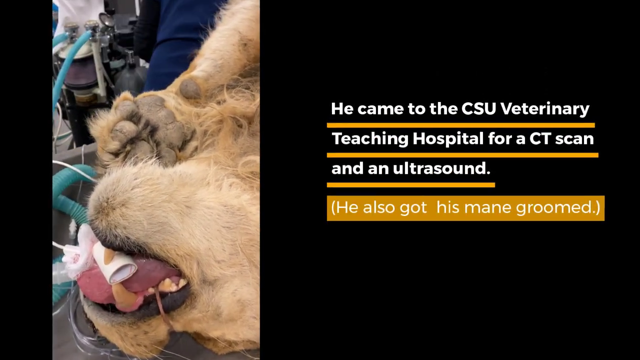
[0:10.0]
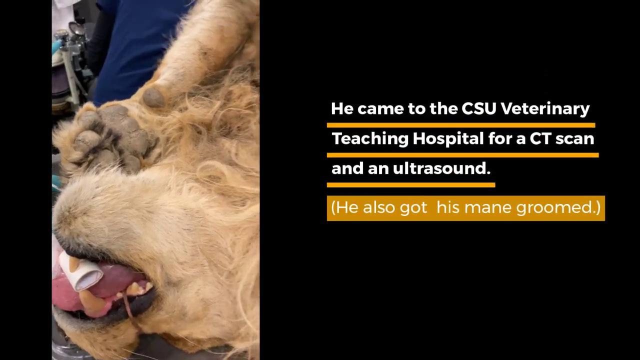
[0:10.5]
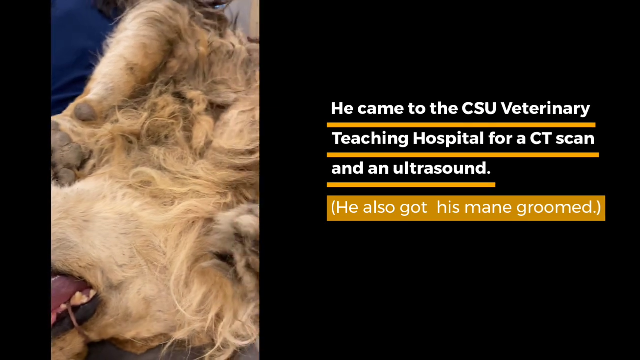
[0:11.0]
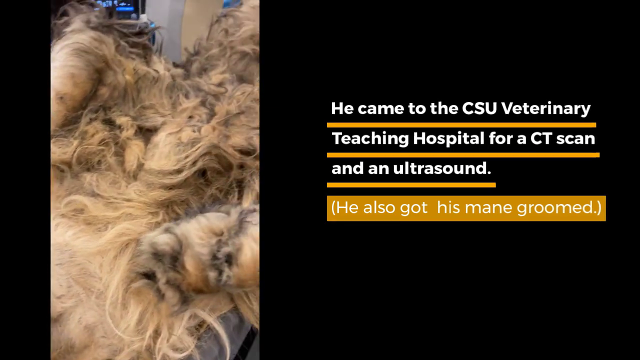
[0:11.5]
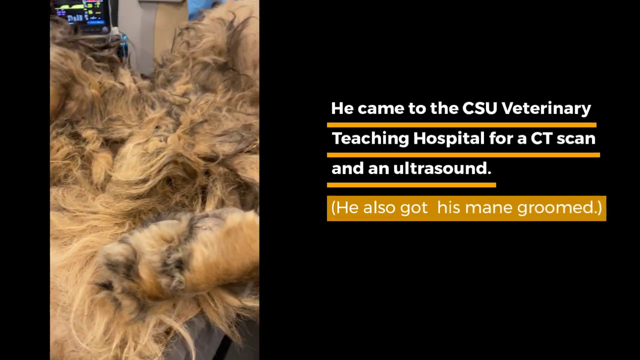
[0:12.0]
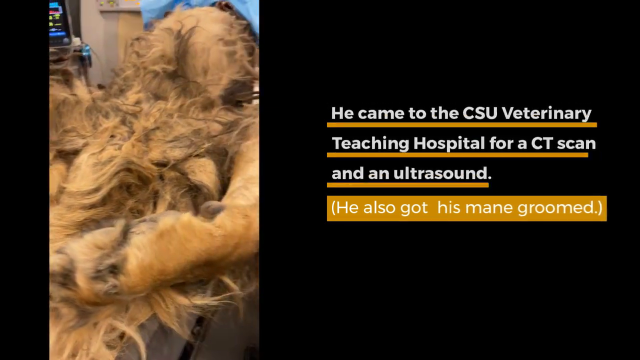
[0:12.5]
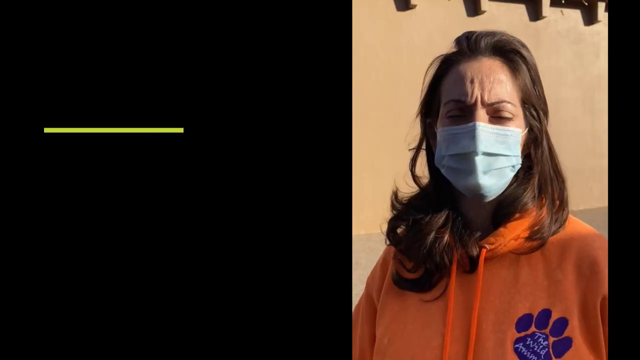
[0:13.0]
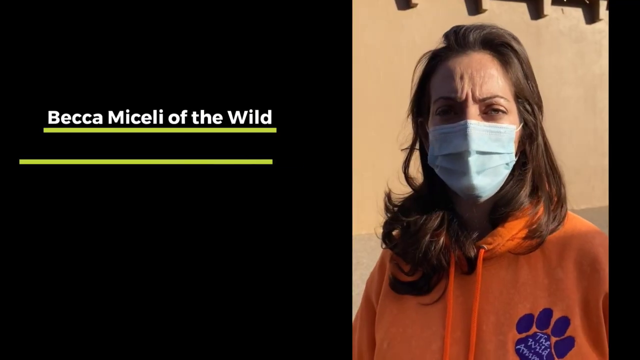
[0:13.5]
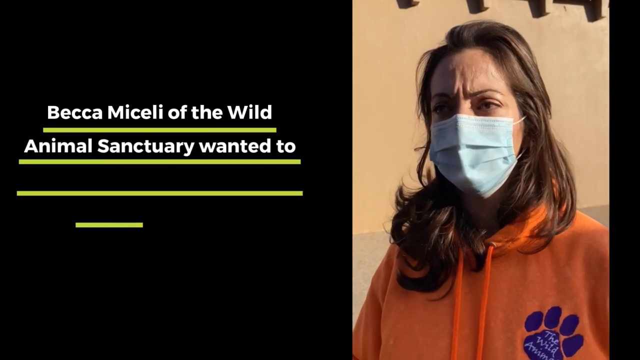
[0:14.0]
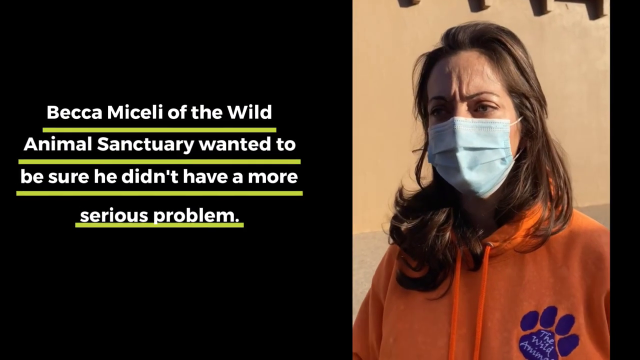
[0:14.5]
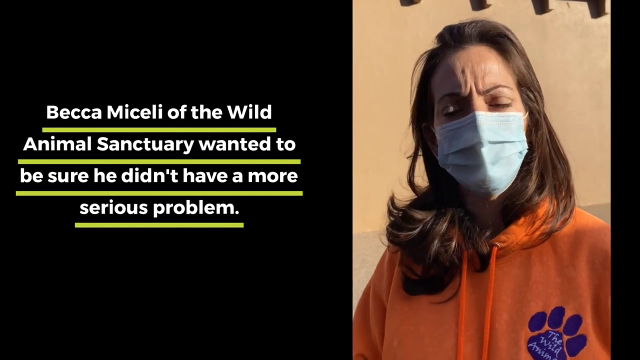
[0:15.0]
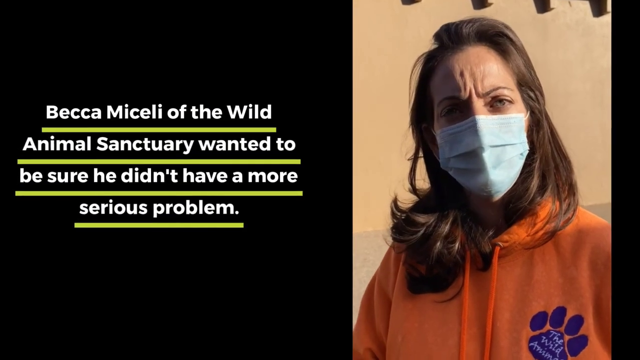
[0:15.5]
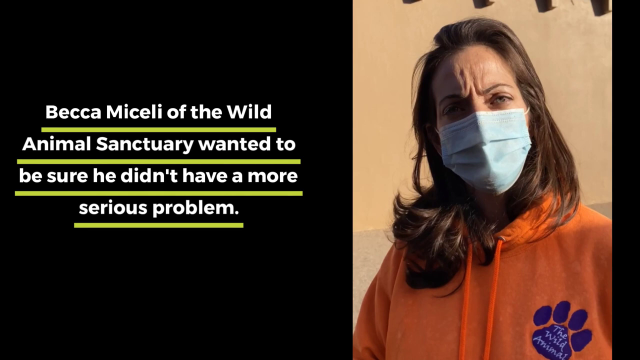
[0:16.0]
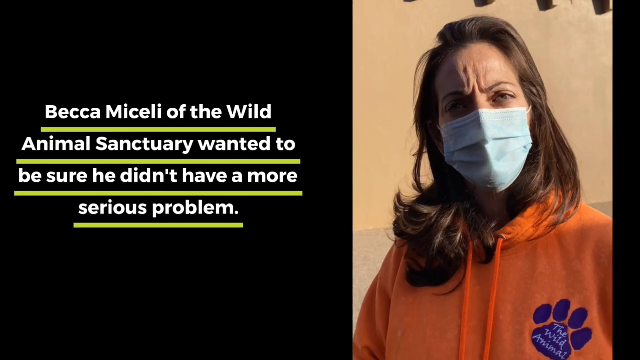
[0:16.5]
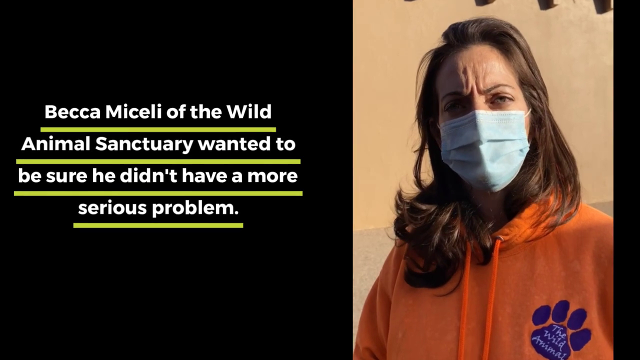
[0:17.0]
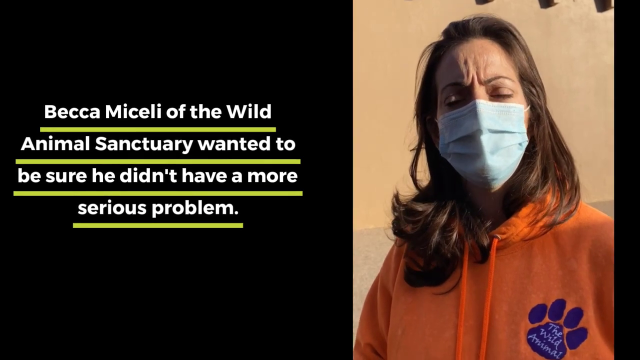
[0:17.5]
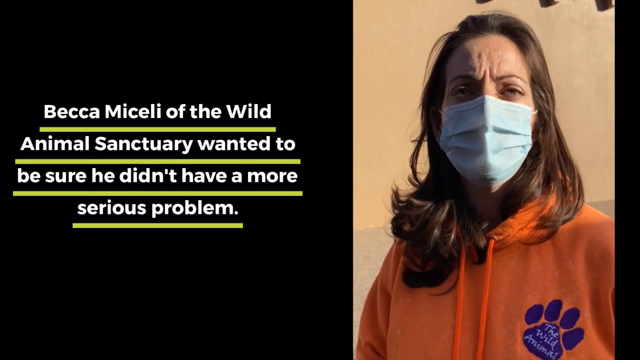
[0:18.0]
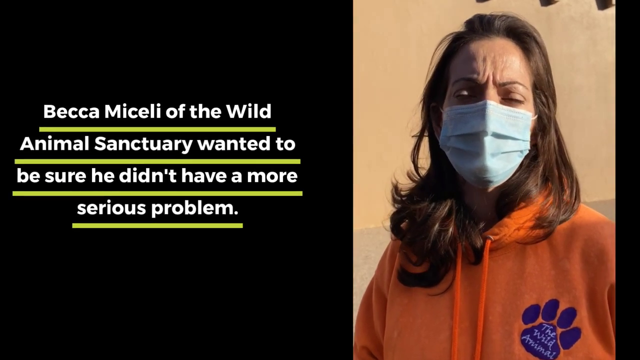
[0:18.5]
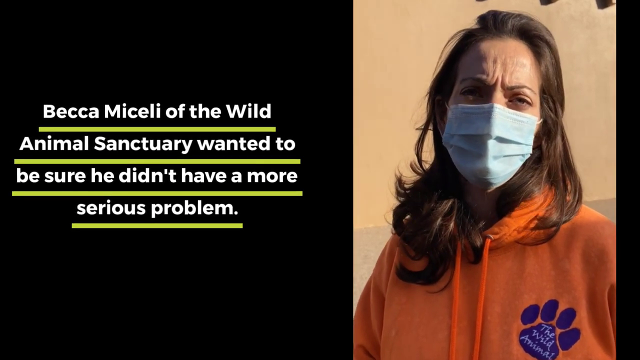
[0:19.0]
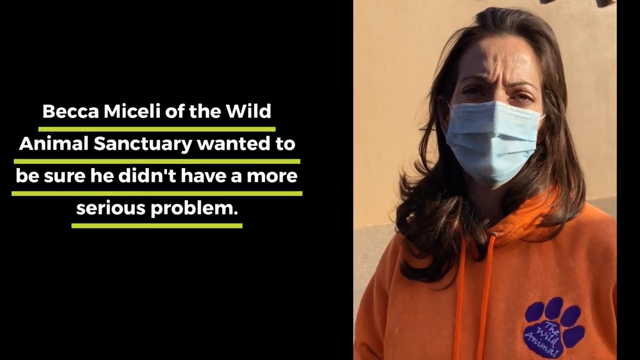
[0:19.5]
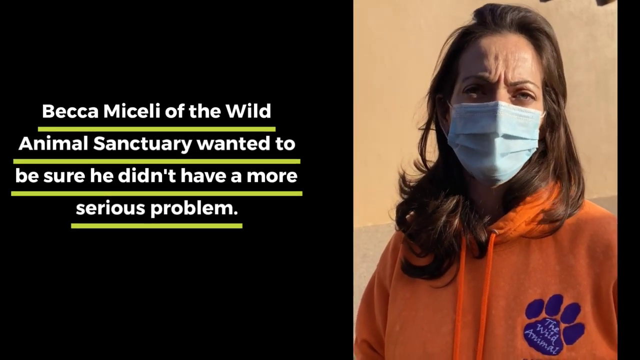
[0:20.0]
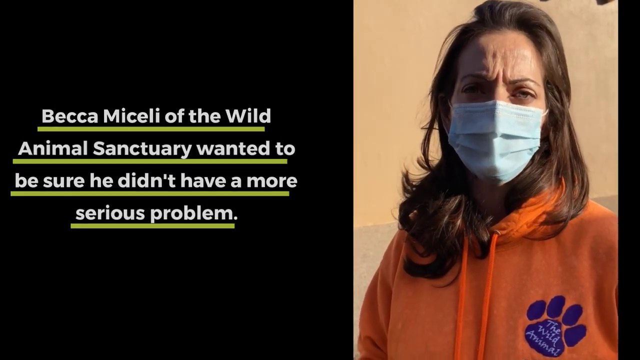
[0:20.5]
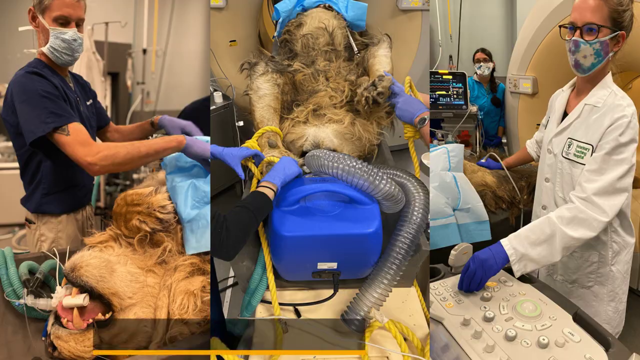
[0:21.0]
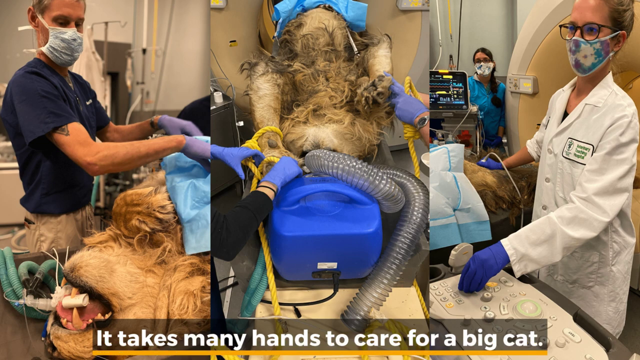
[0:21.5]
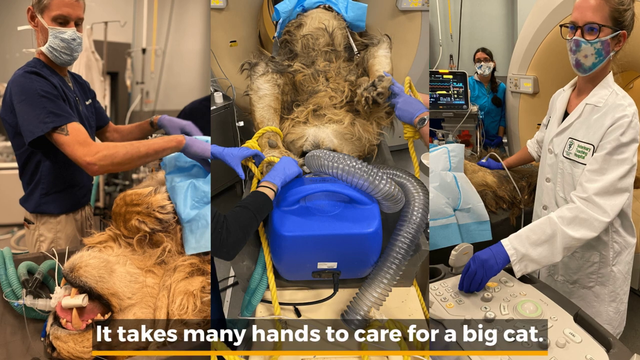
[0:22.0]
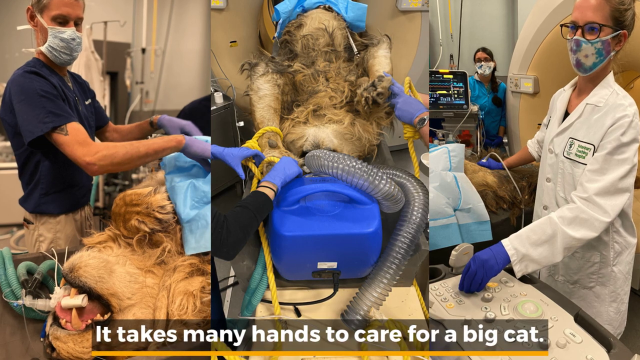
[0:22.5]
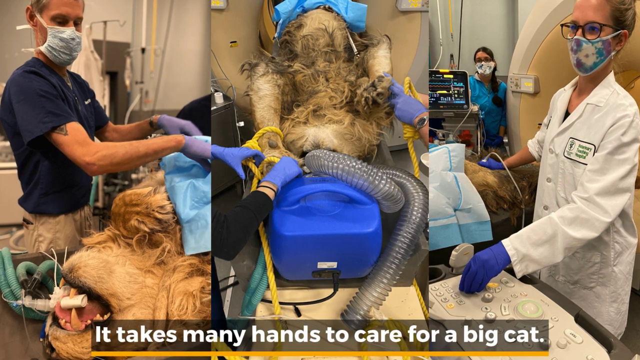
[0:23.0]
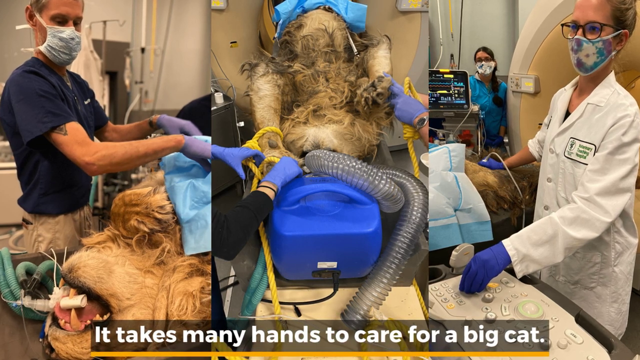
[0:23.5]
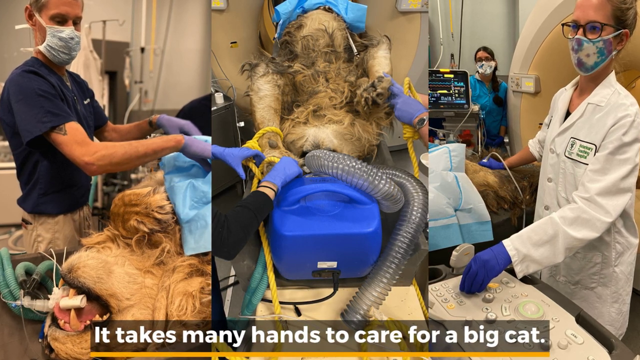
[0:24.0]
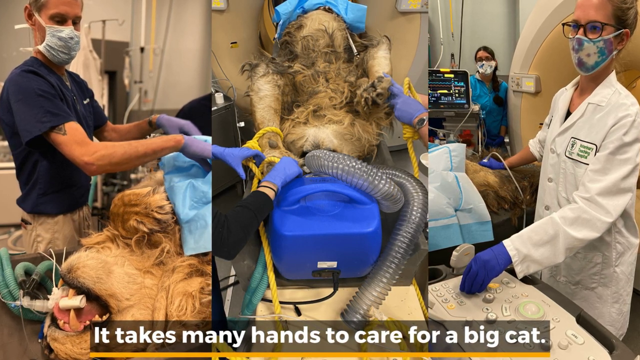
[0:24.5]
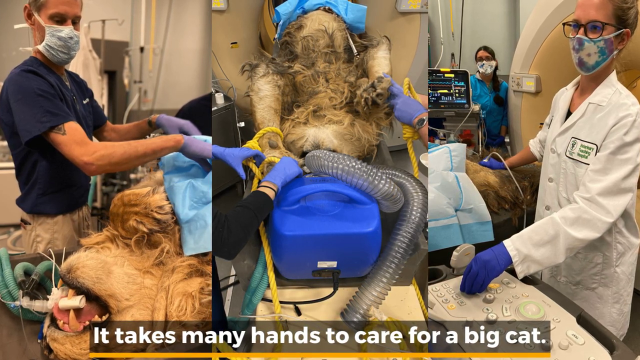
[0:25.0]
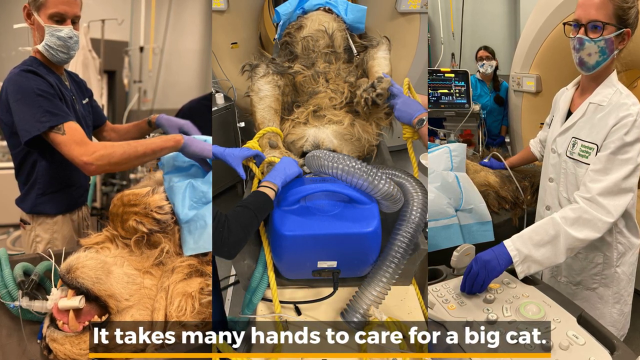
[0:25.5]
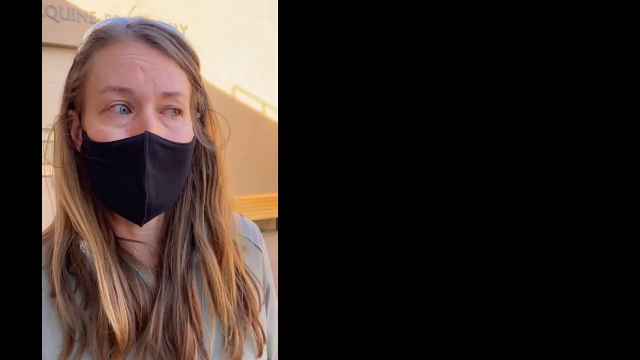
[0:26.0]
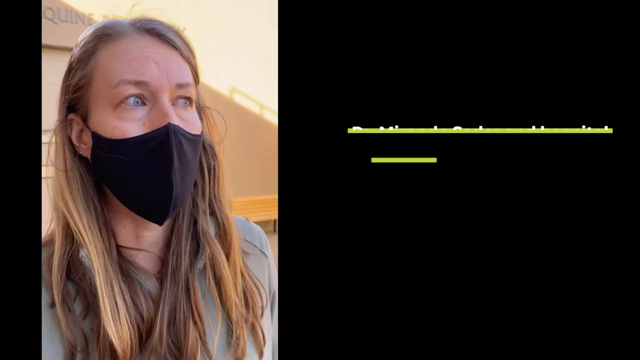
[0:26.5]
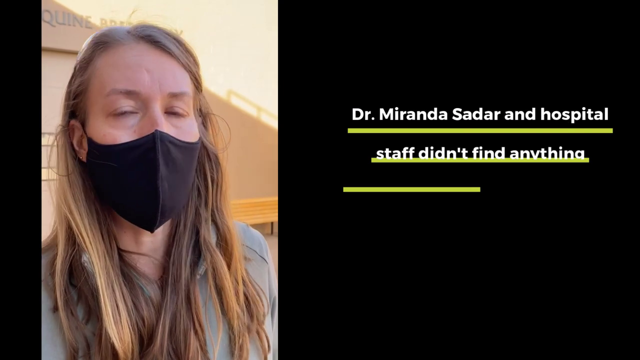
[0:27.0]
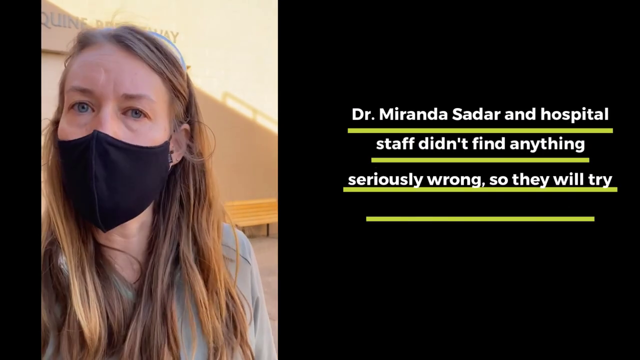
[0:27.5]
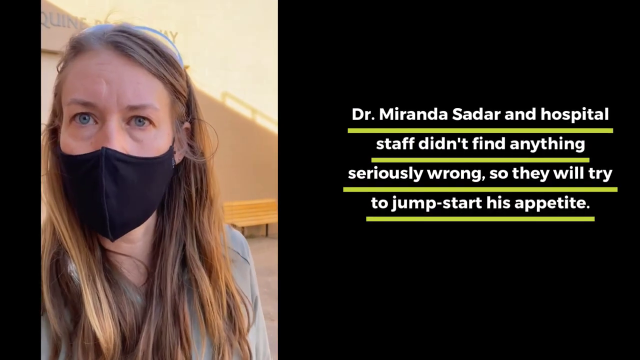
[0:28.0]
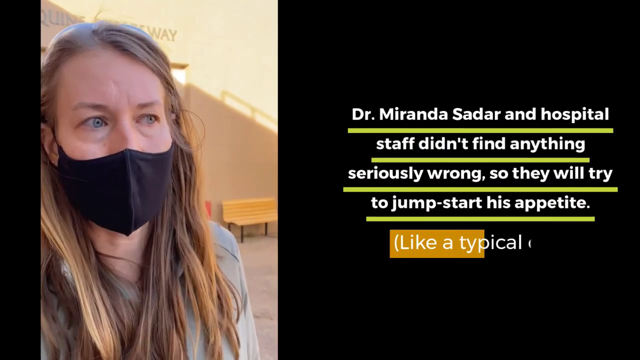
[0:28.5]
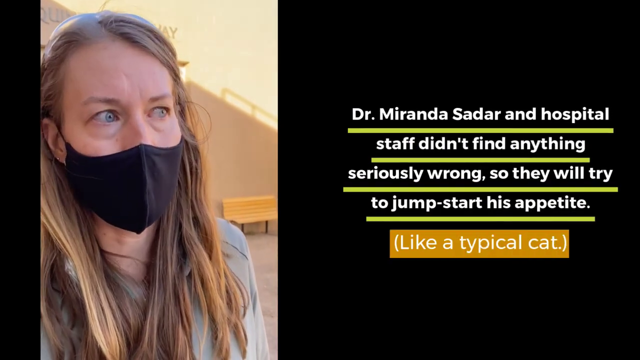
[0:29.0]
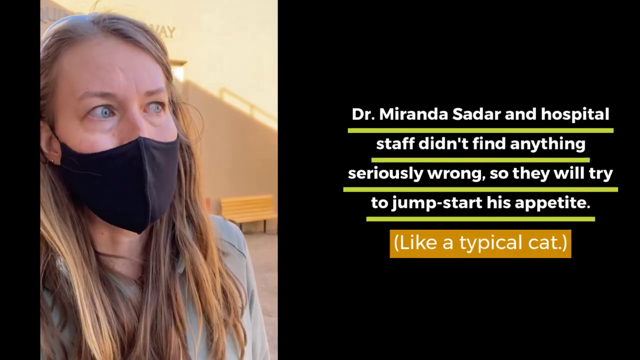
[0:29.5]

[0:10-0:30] On a black screen, a video on the left side shows a lion that appears to be under anesthesia, laying on its back, in a close-up of its mouth. Some kind of white tube is underneath its tongue and its paw is up near its face. Text on the right side of the screen reads "he came to the CSU Veterinary Teaching Hospital for a CT scan and an ultrasound," and underneath in parentheses "he also got his mane groomed." The video pans down the lion, showing its stomach since it is laying on its back; its hair looks kind of matted and stuck together. The scene changes to a woman with medium-length brown hair, wearing an orange hoodie with a blue paw print on the chest and a blue medical mask, seen from the chest up and talking under her mask. Text on the left side reads "Becca Miceli of the Wild Animal Sanctuary wanted to be sure he didn't have a more serious problem." Next comes what looks like a collage of three images of the lion at the vet: on the left, a close-up of the lion's mouth as it lays on its back on a table with a vet nearby; in the middle, the lion apparently in some type of tube-like machine with its stomach, upper body and head sticking out; on the right, apparently the end of a table with the lion's feet sticking out and a woman vet in a white coat next to it. Text at the bottom reads "It takes many hands to care for a big cat." The scene then changes to a woman with straight dirty blonde hair and blue eyes, wearing a black medical mask, with text on the right side reading "Dr. Miranda Sadar and hospital staff didn't find anything seriously wrong, so they will try to jump-start his appetite." Underneath, in parentheses, it says "like a typical cat."